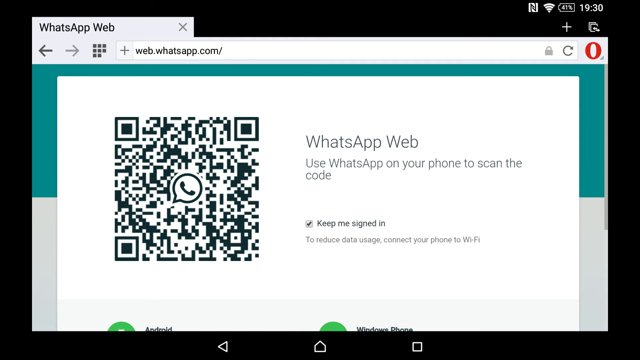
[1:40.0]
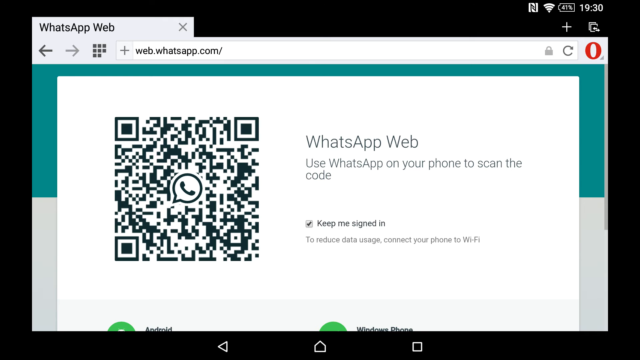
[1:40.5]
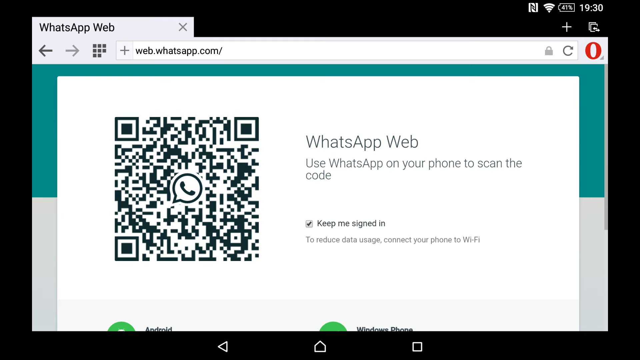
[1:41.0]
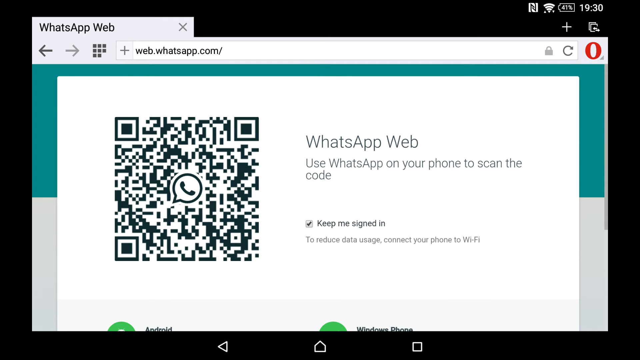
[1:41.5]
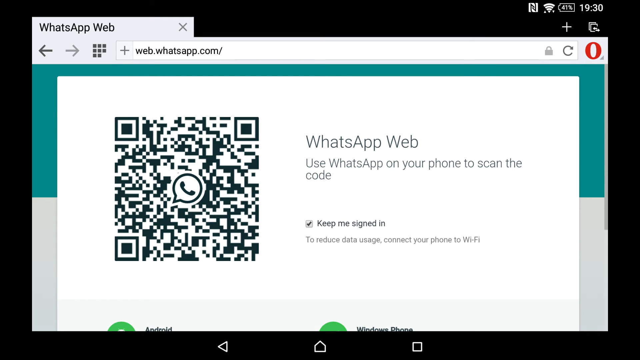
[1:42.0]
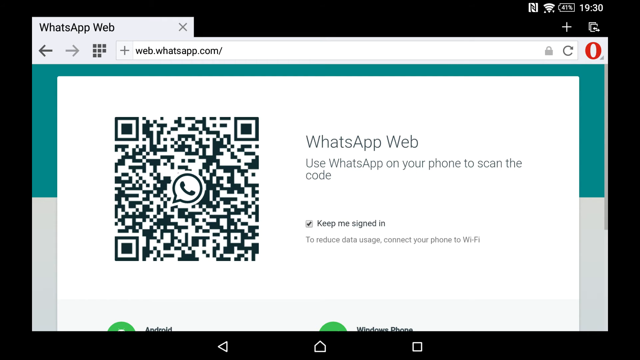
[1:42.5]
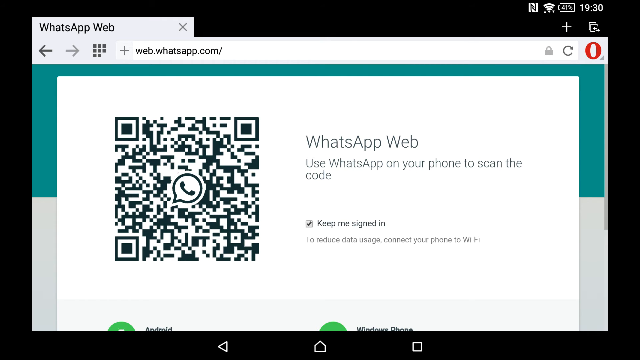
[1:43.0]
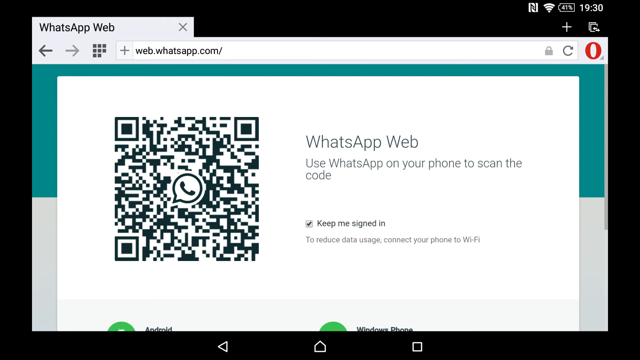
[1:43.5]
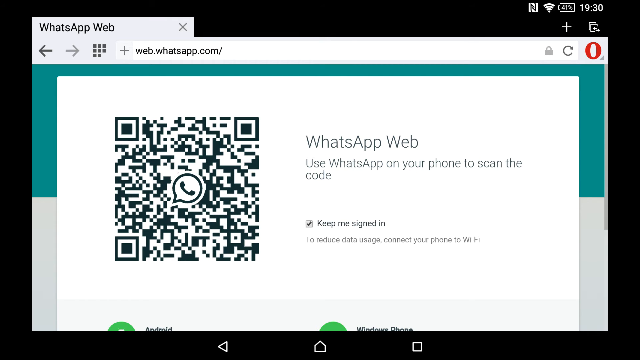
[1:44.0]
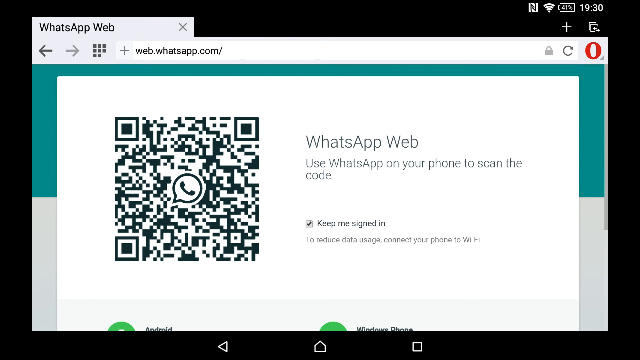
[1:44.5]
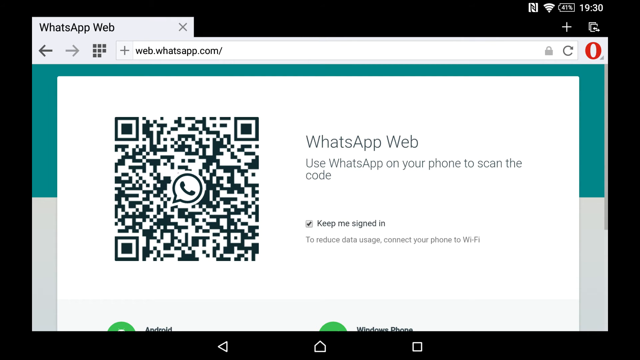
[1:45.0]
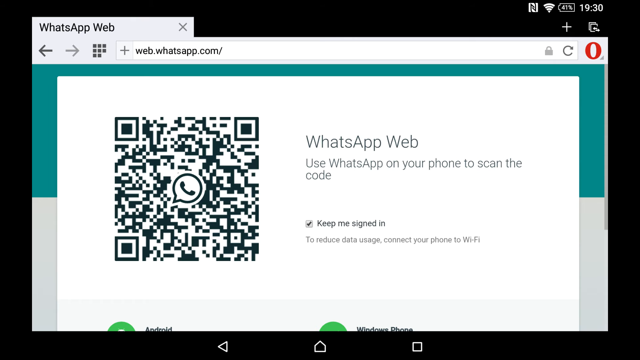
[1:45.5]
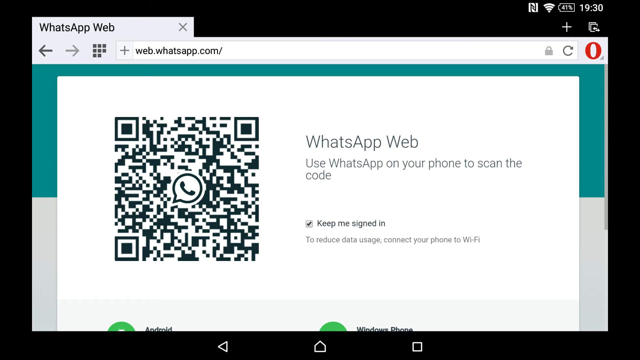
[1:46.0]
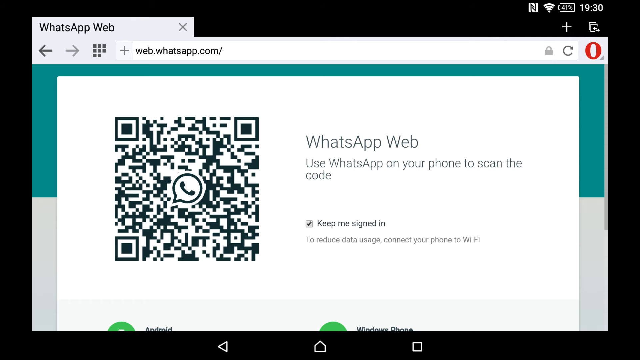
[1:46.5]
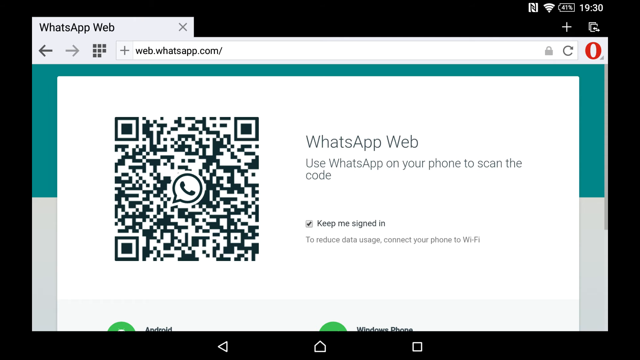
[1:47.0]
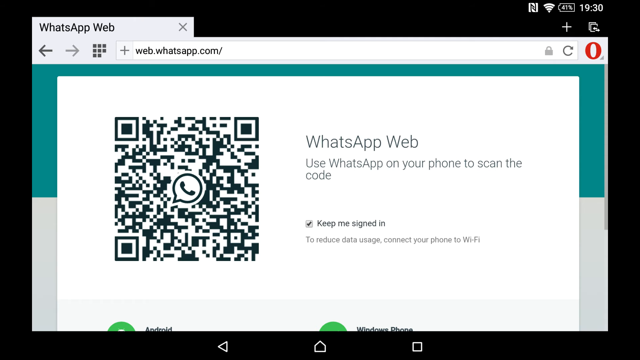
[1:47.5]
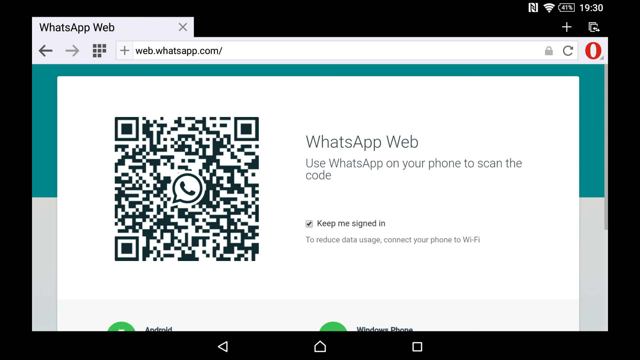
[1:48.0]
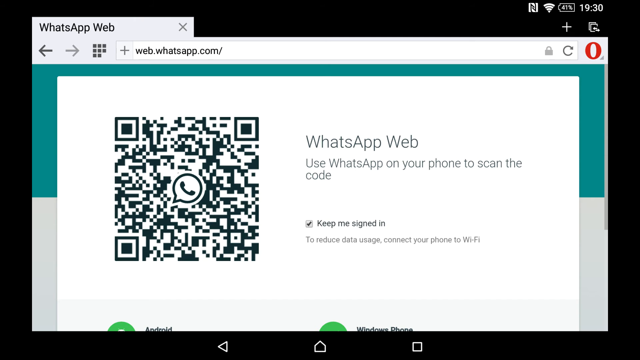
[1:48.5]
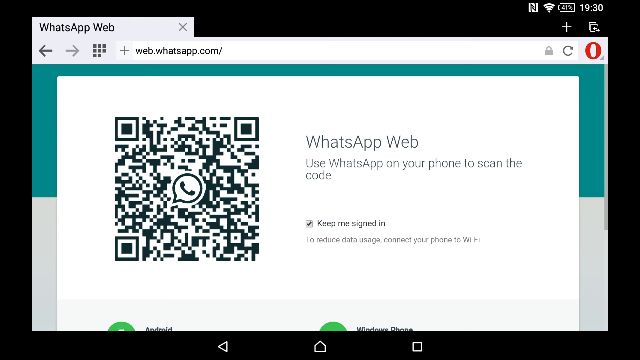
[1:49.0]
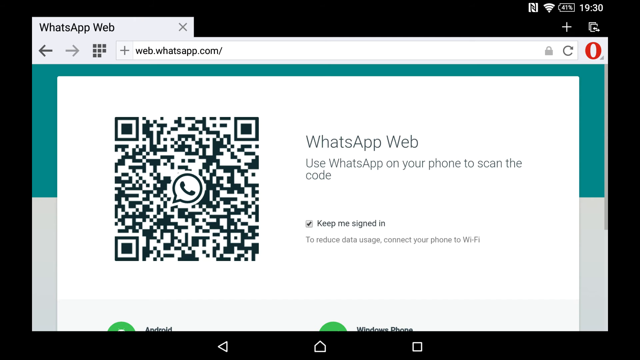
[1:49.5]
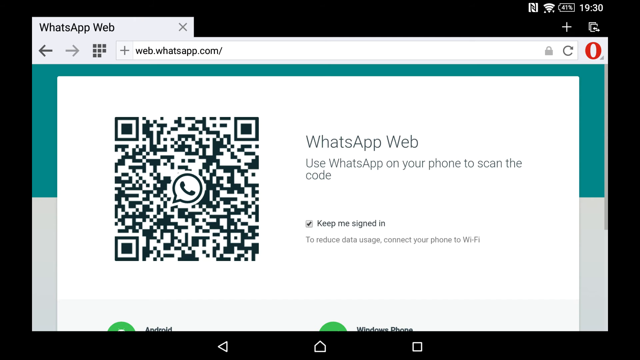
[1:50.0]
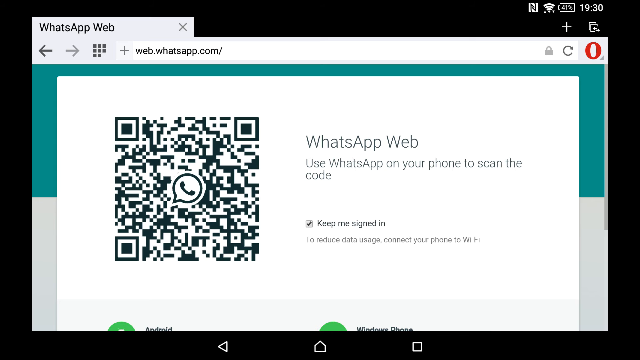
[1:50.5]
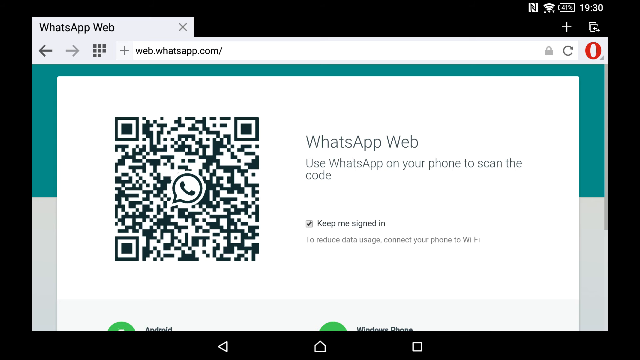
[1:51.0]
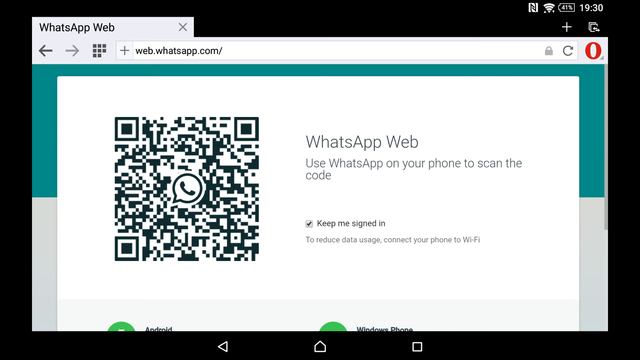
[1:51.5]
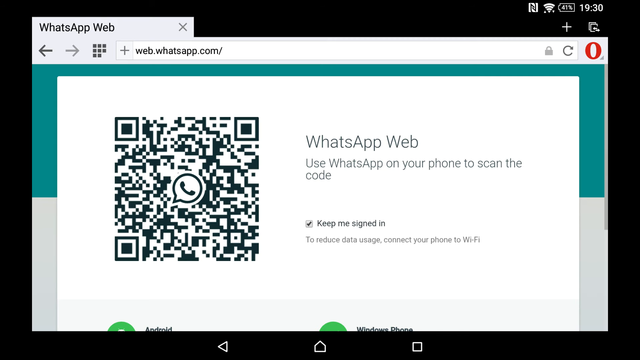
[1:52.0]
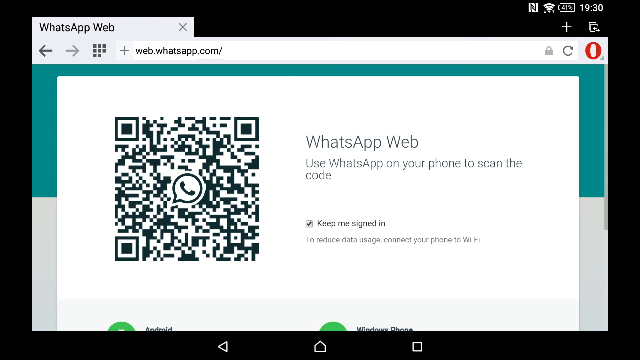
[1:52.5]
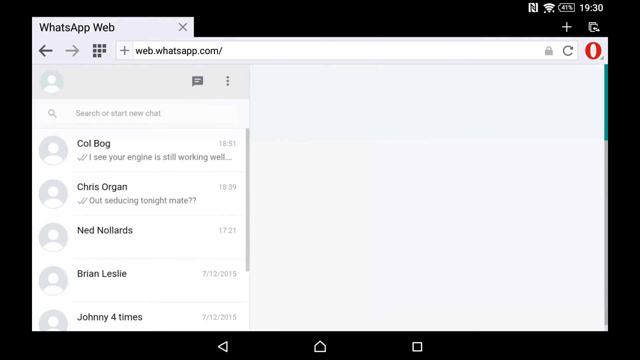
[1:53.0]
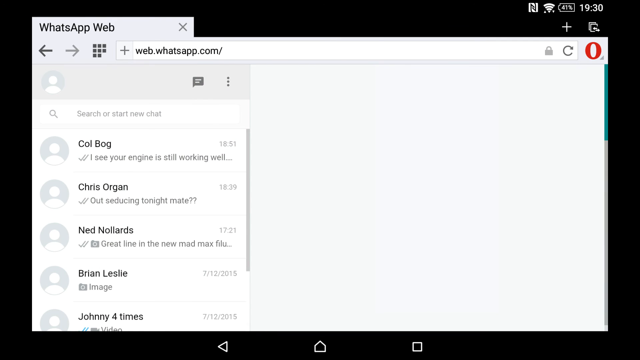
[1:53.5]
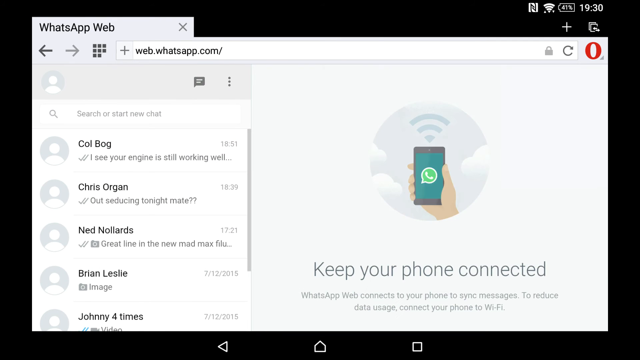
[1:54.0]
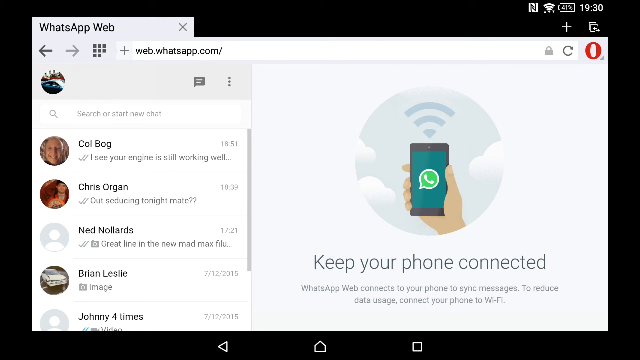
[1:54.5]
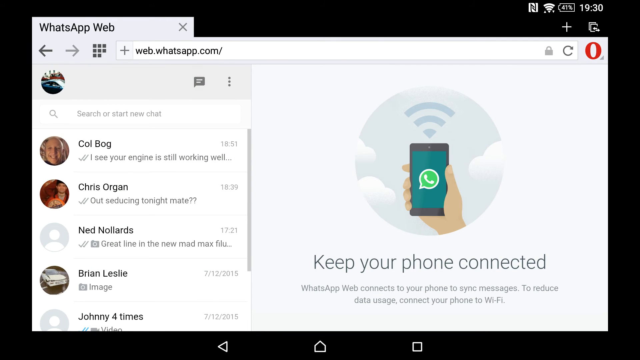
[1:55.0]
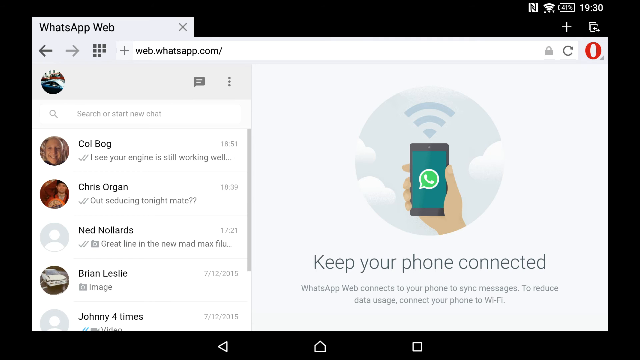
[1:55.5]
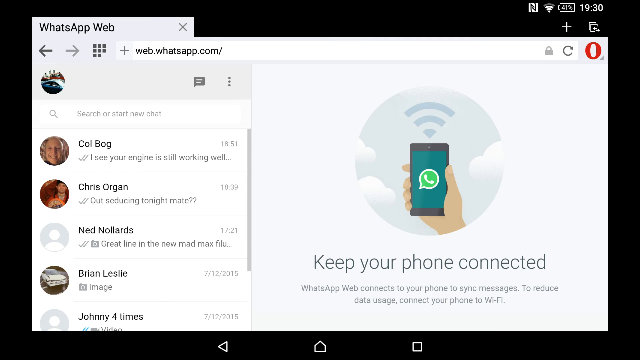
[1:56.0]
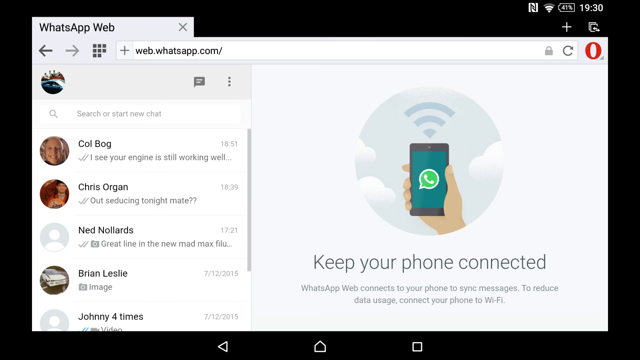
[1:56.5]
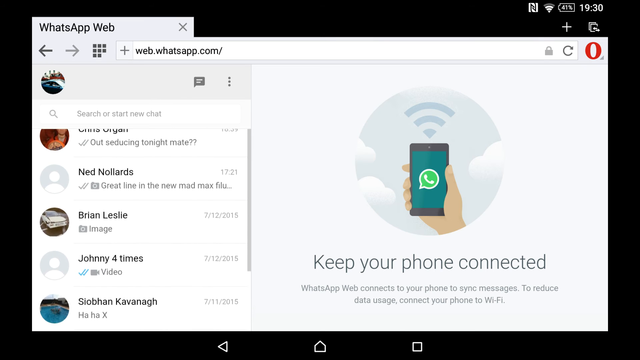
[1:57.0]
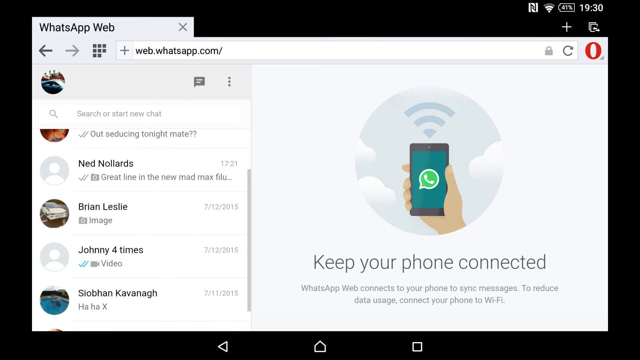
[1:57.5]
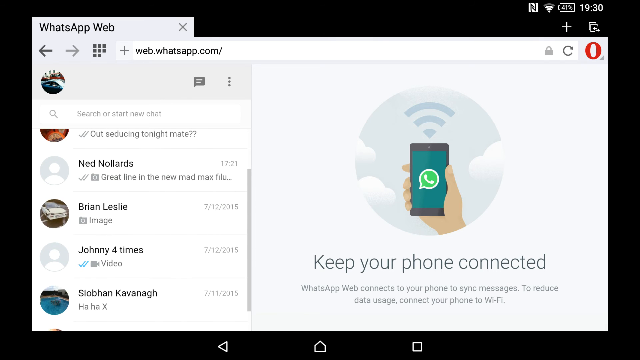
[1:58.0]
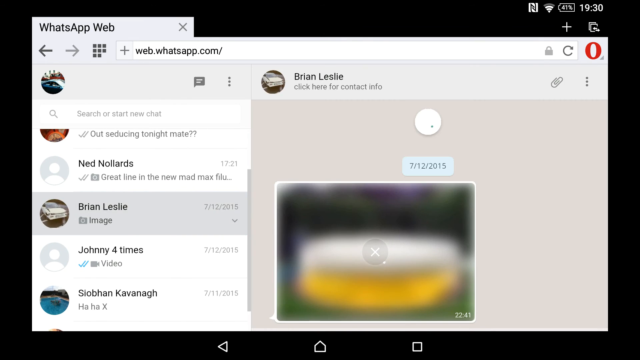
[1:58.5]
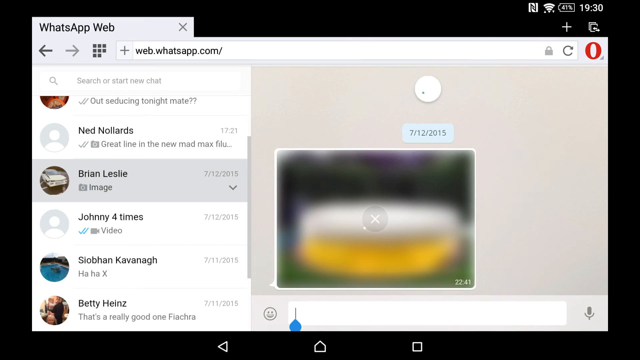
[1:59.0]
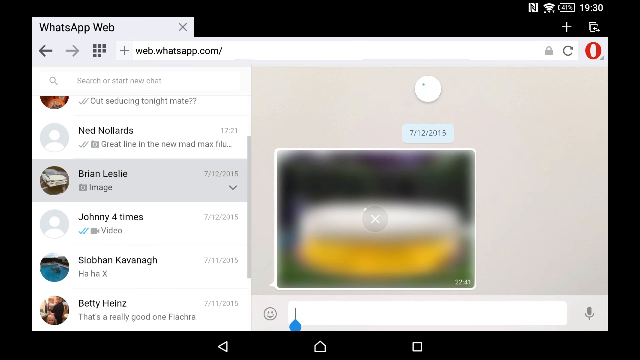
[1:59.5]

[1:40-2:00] On the WhatsApp page, a QR code is still showing with text telling the user to use WhatsApp on their phone to scan the code. A list of chats appears, including Chris Portman, Ned Norlitz and Johnny, and the user seems to scroll down and select Brian Leslie. An image appears to have been sent in that conversation not long ago, but it is blurry, so its content cannot be seen. The screen then returns to white, saying "WhatsApp web, use WhatsApp on your phone to scan the QR code," with Opera in the top right-hand corner. The last exchange with Brian Leslie looks to be from July 2015.